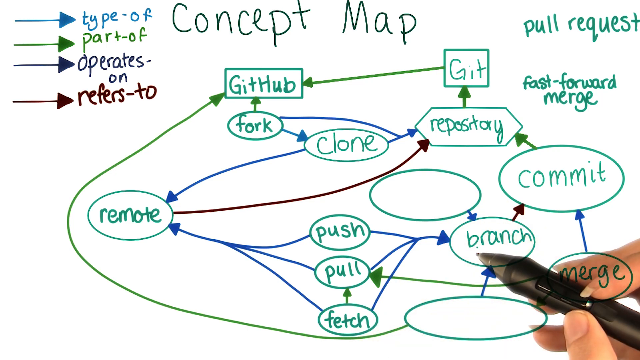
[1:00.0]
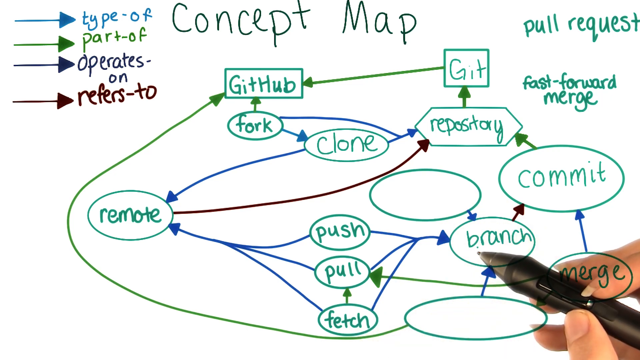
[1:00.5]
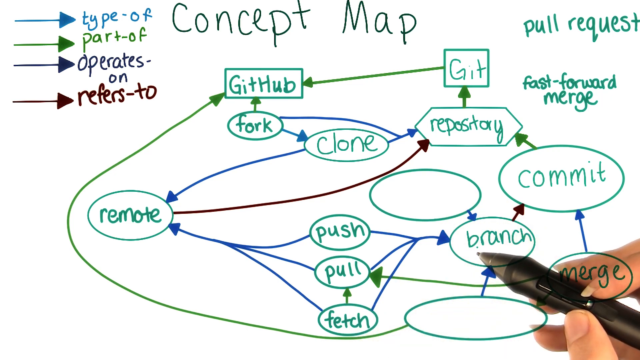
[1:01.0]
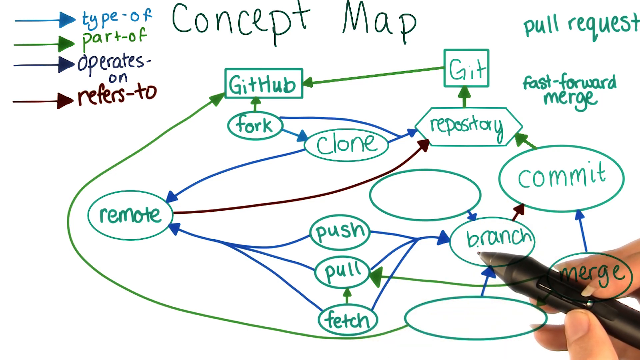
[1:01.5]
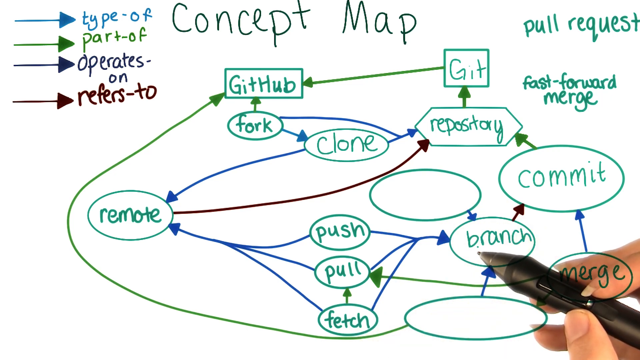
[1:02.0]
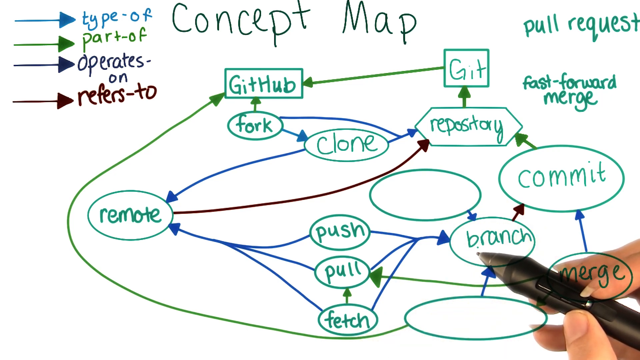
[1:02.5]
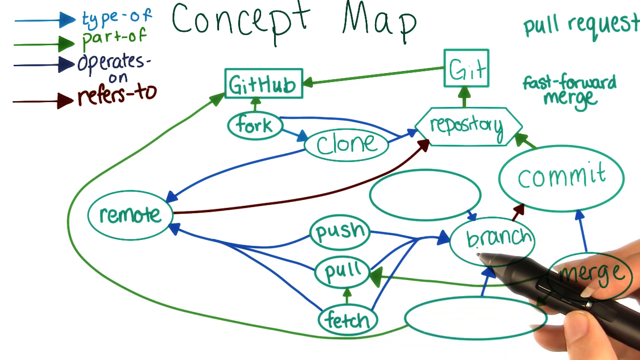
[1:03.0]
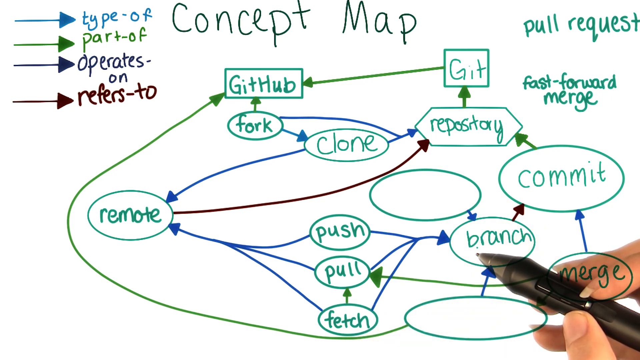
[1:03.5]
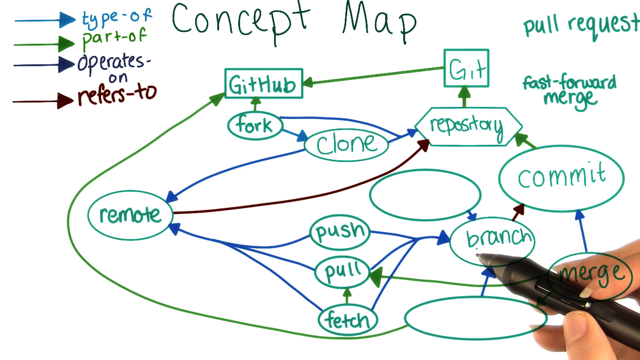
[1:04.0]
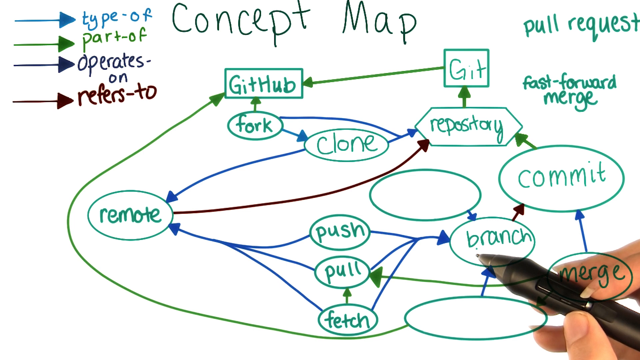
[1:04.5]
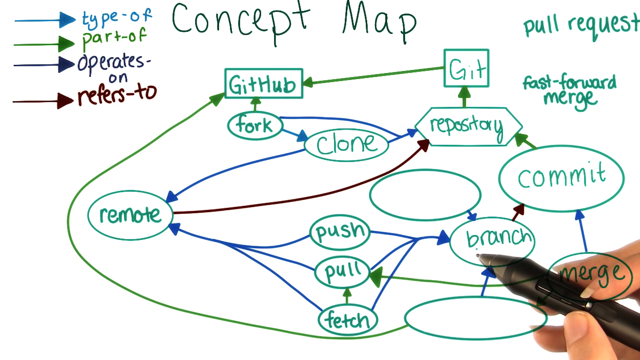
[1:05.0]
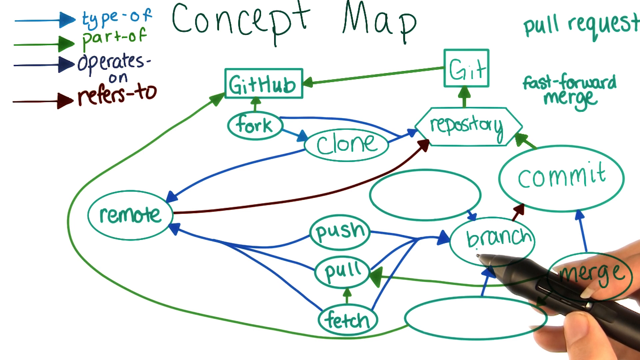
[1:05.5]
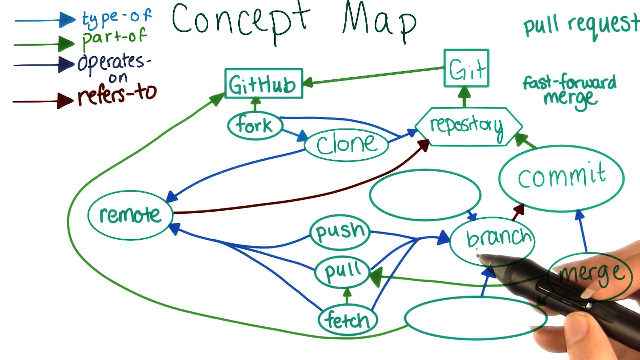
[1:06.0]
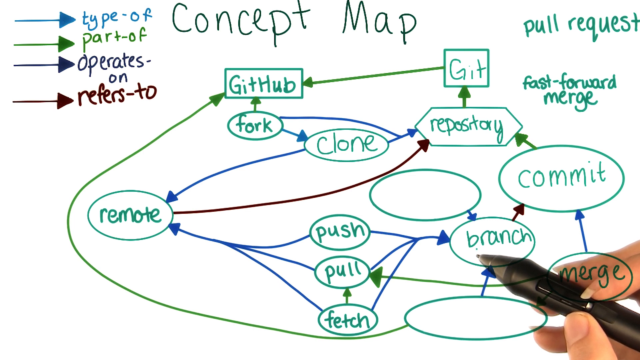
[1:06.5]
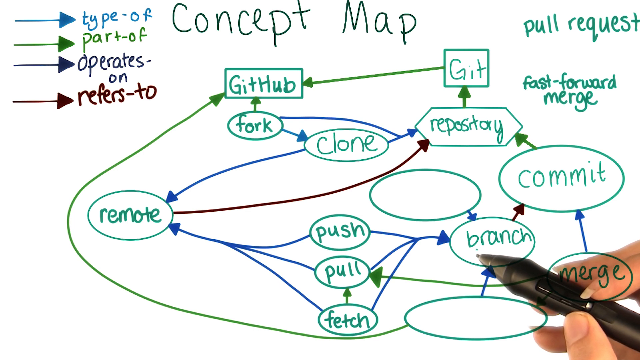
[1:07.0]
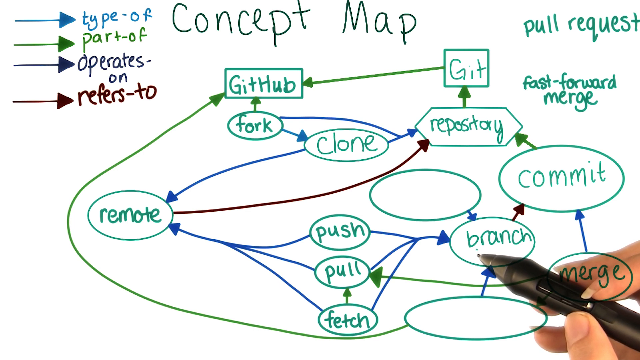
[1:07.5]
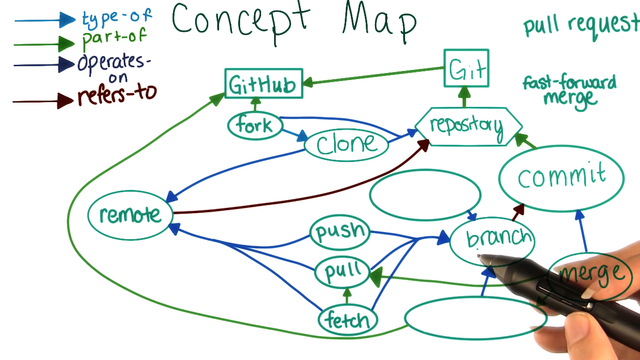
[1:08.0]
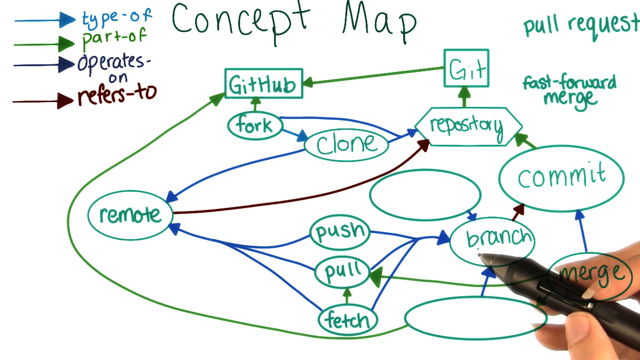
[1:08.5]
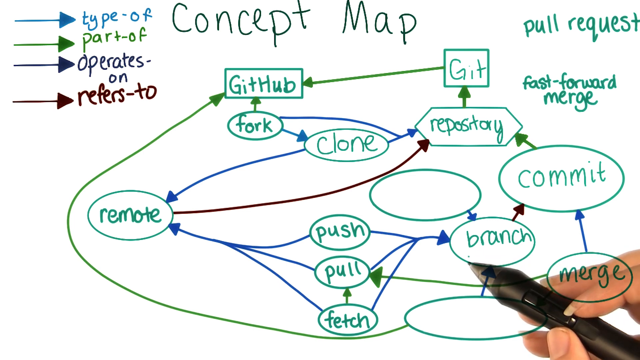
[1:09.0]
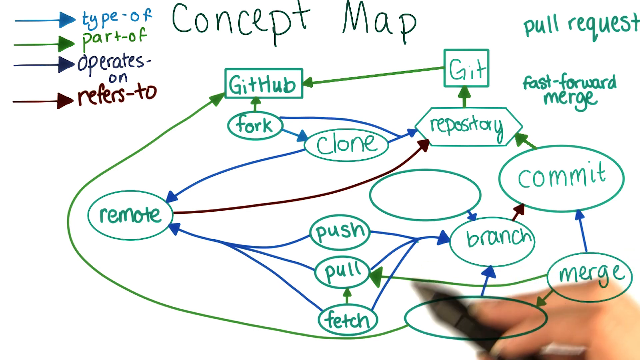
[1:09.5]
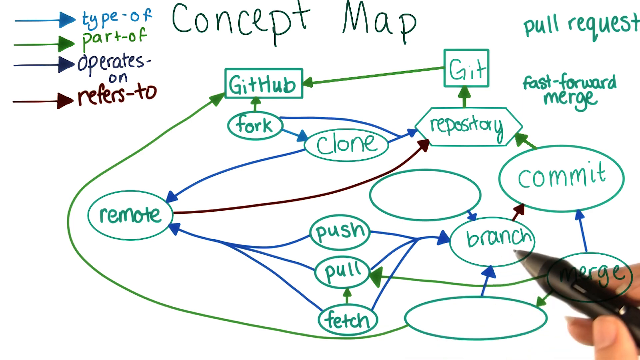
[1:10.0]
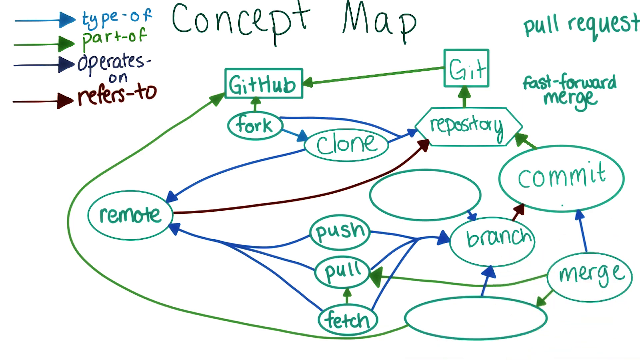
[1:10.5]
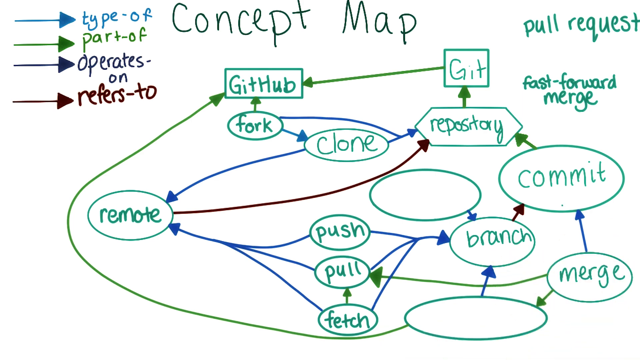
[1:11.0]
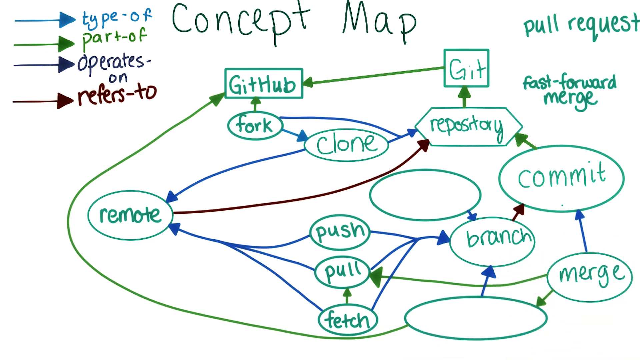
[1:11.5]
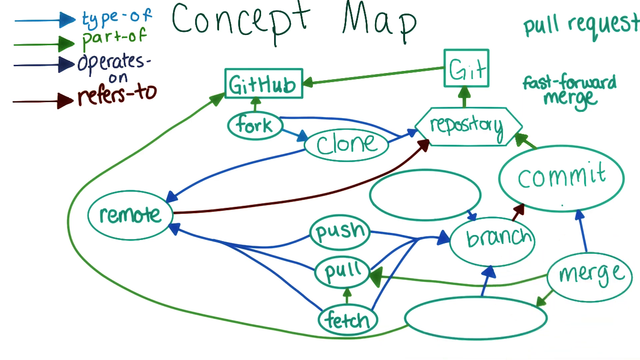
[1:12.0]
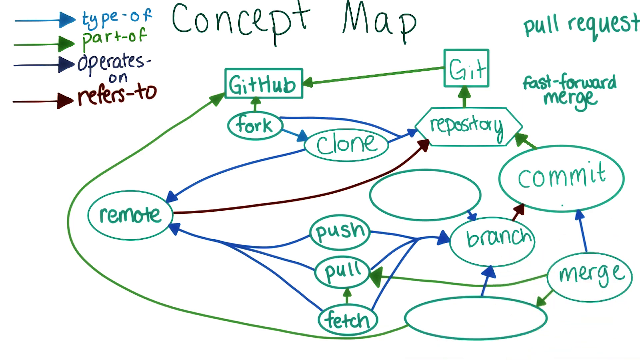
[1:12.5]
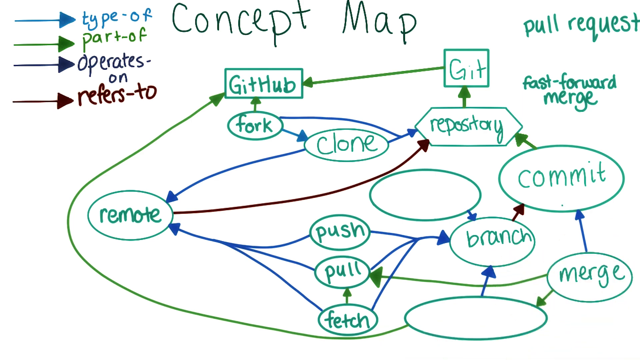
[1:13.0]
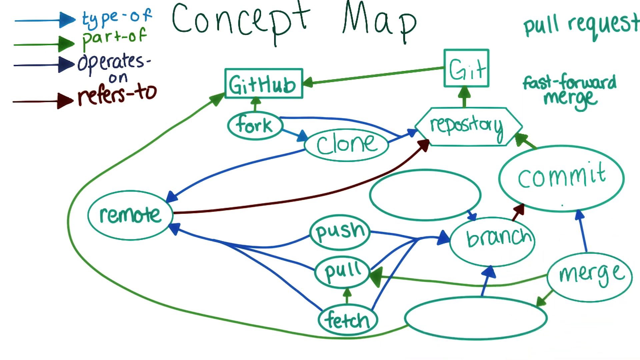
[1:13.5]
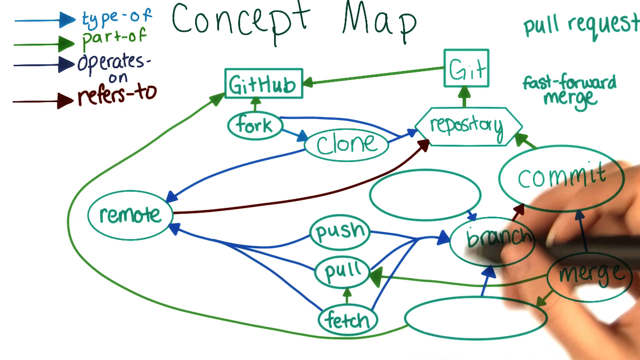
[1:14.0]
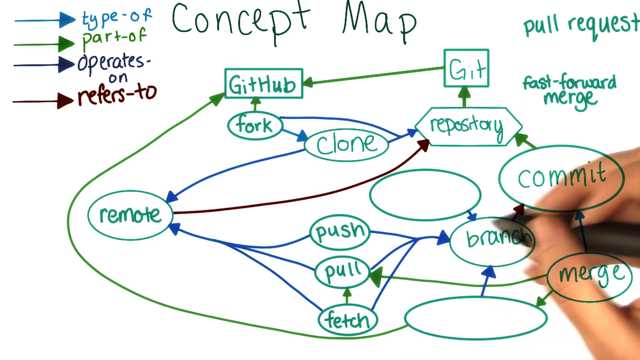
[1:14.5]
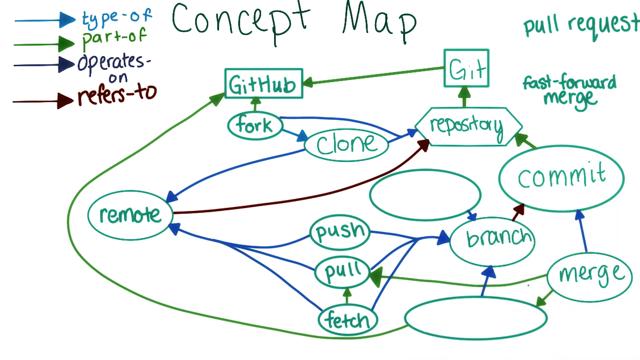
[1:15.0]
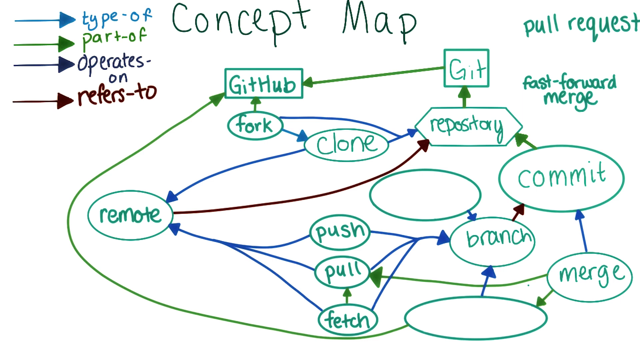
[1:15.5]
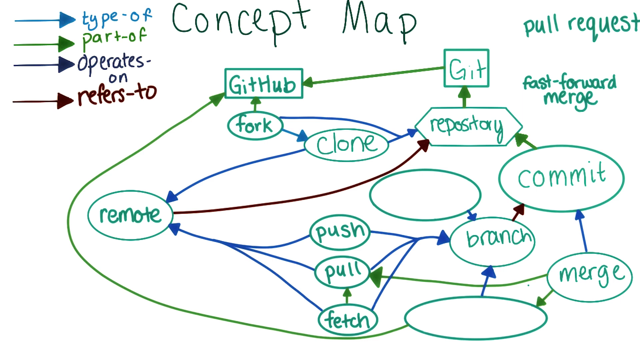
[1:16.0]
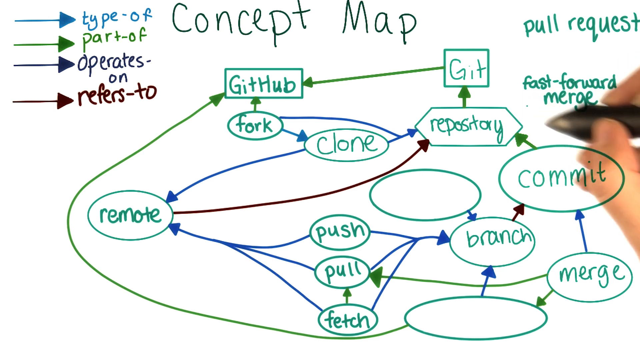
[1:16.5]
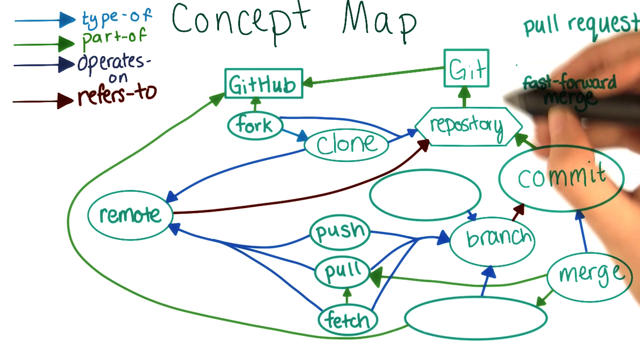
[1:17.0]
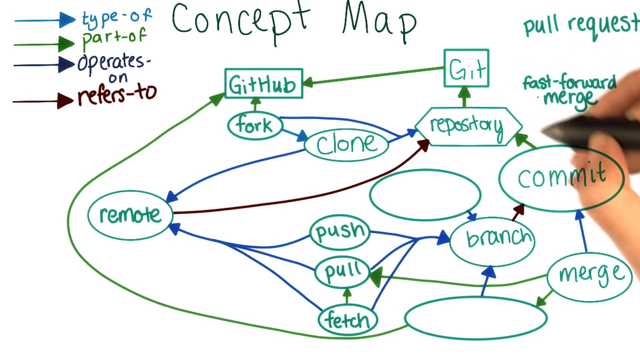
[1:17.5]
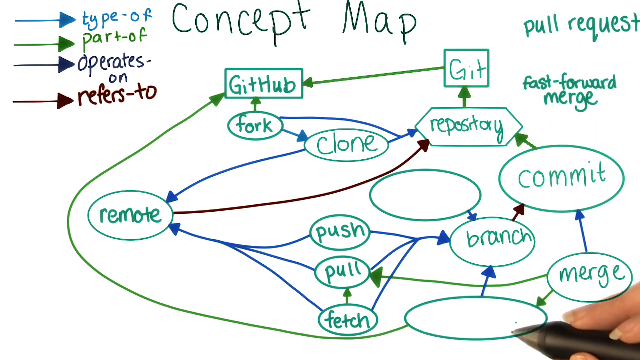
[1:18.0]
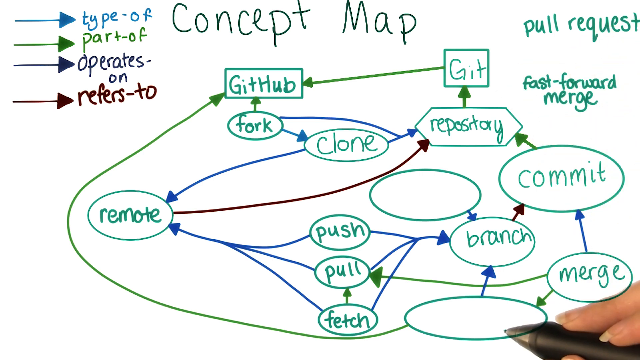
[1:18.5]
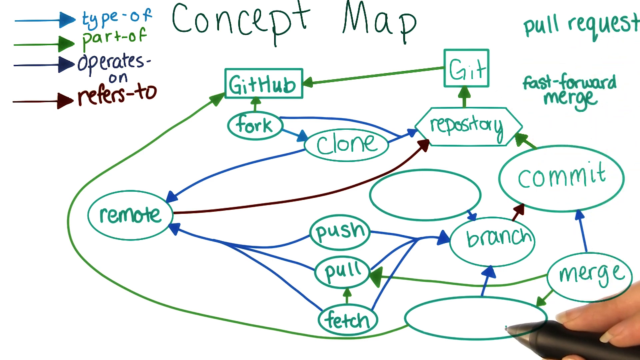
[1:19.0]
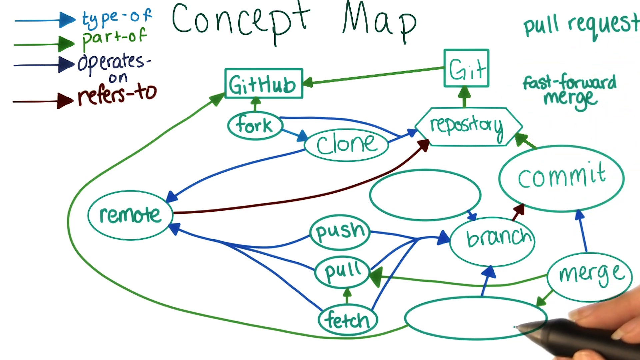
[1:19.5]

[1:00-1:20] A concept map has four color-coded arrows on the left labeled "type of," "part of," "operates on" and "refers to." The woman holds what looks like a black cartridge pen between her thumb and first finger and highlights different words. Words include "pull request," "git," "github," "fork," "clone," "remote," "repository," "commit," "branch," "merge," "fetch," "pull" and "push." She goes to different circles and points at them with the tip of the pen. Three circles are empty. She keeps moving her hand around the page, pretending to make circles around things. She highlights "fast forward merge," goes to the circle at the bottom, and goes back up to "branch." Arrows go from each of the descriptions to the circles to show how they are interconnected. The writing is green and the circles are green.